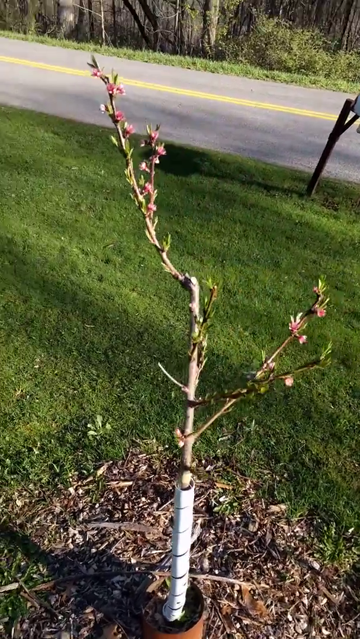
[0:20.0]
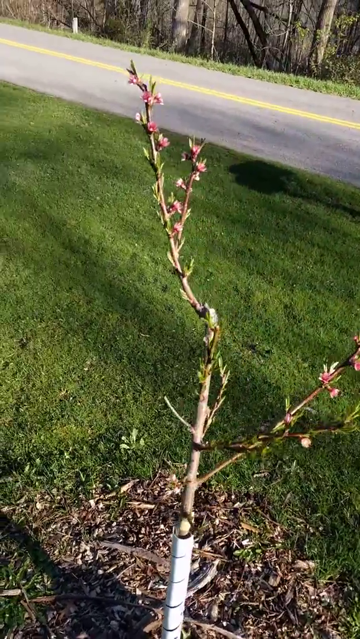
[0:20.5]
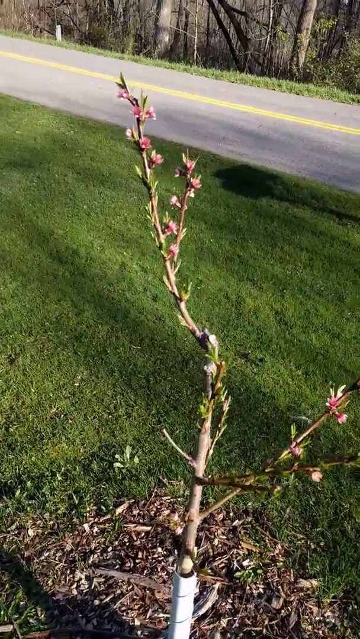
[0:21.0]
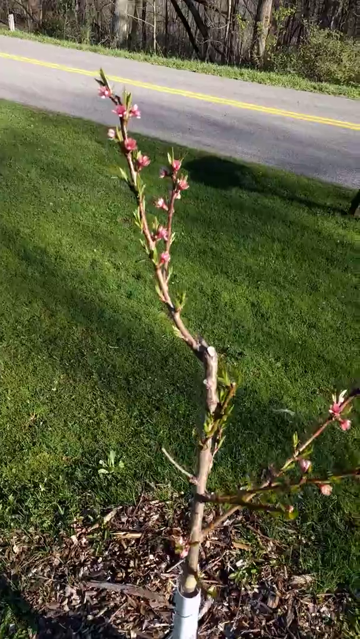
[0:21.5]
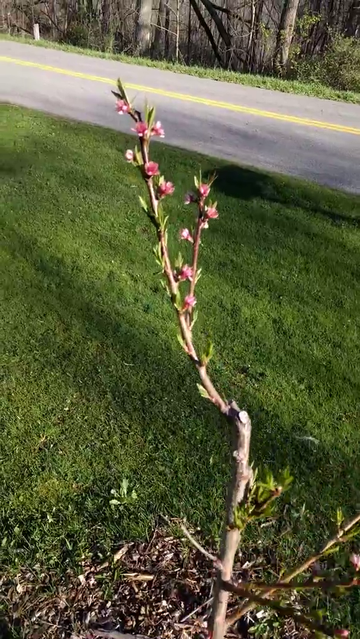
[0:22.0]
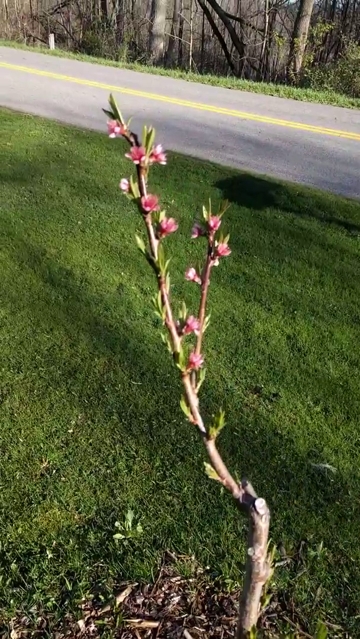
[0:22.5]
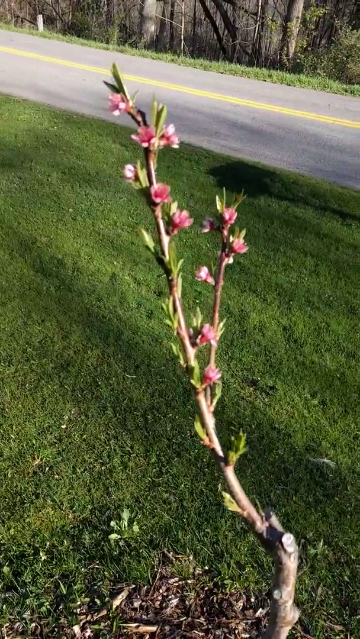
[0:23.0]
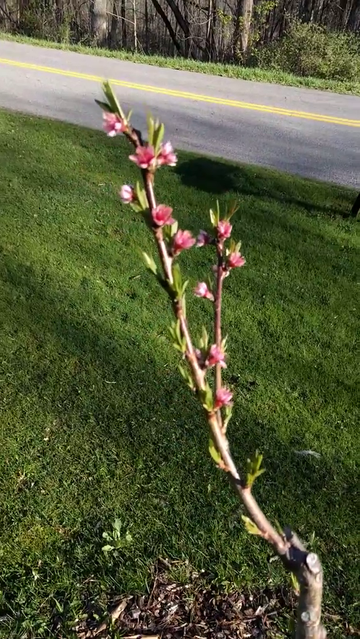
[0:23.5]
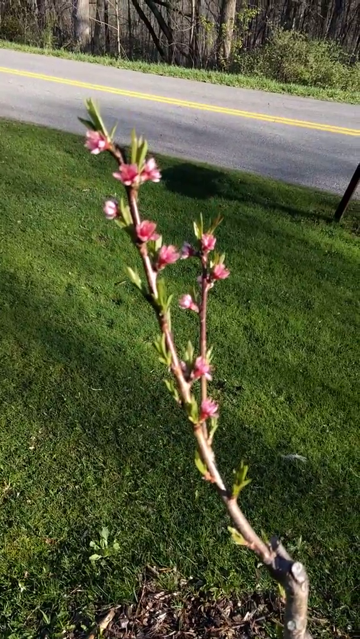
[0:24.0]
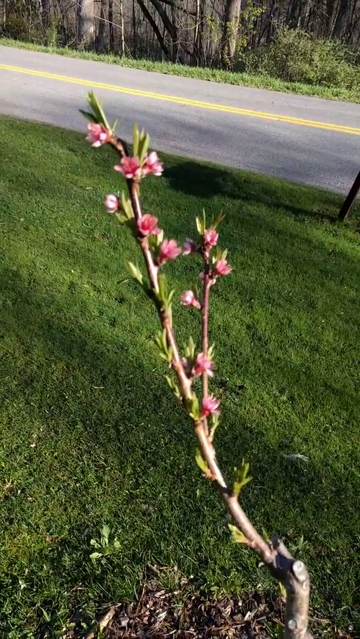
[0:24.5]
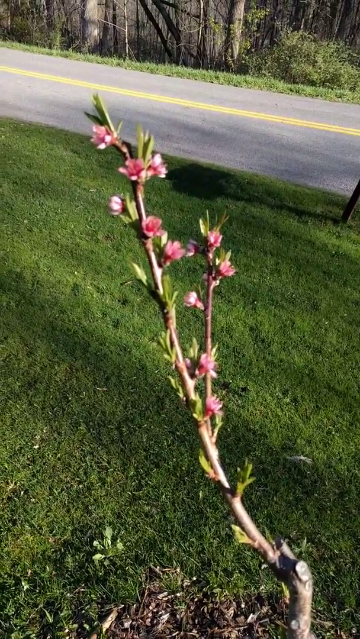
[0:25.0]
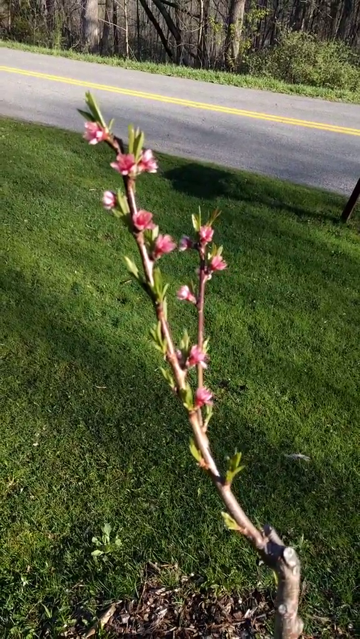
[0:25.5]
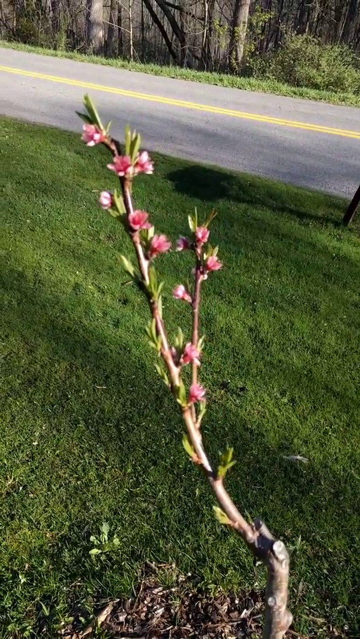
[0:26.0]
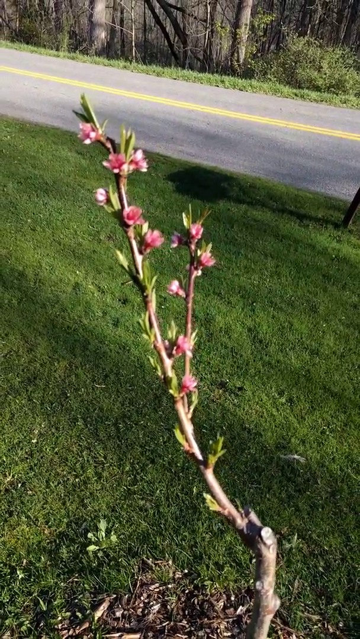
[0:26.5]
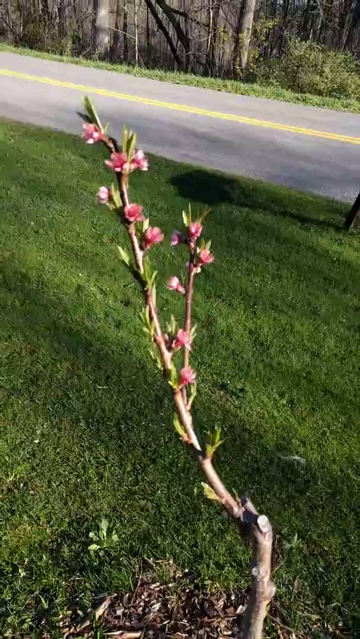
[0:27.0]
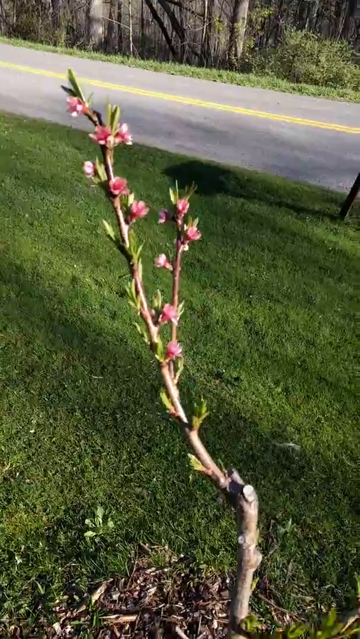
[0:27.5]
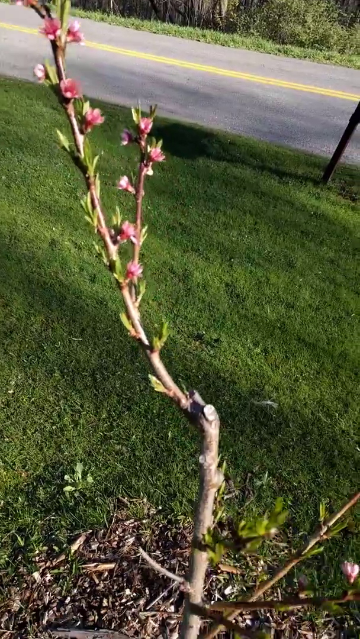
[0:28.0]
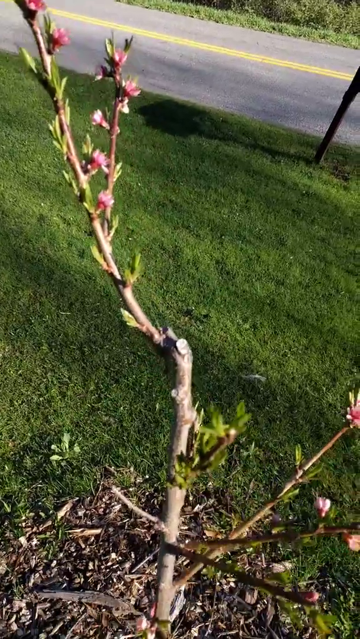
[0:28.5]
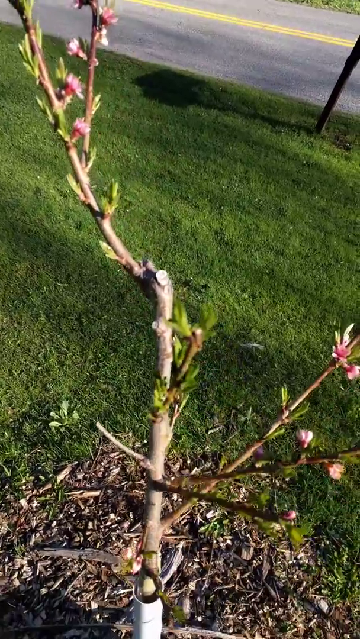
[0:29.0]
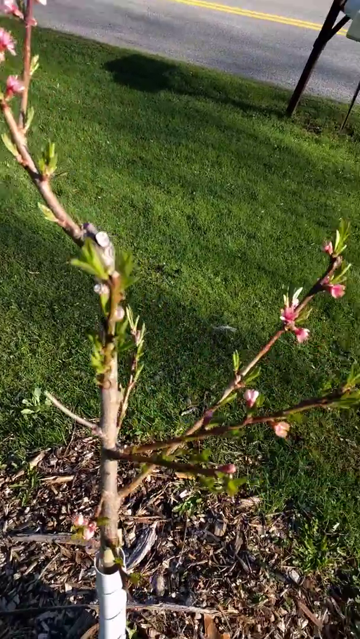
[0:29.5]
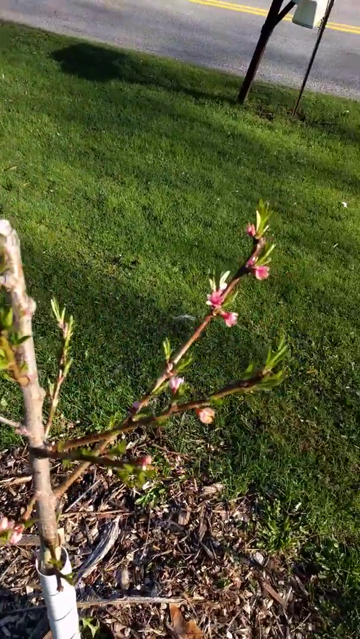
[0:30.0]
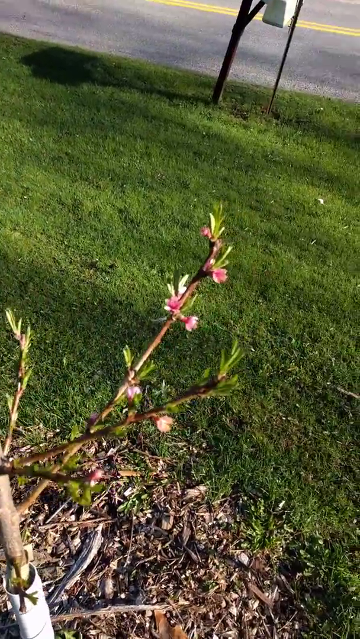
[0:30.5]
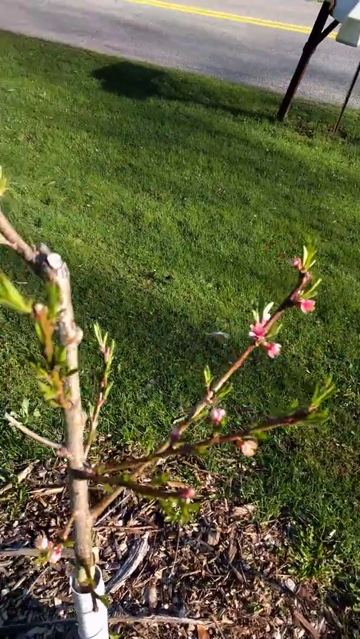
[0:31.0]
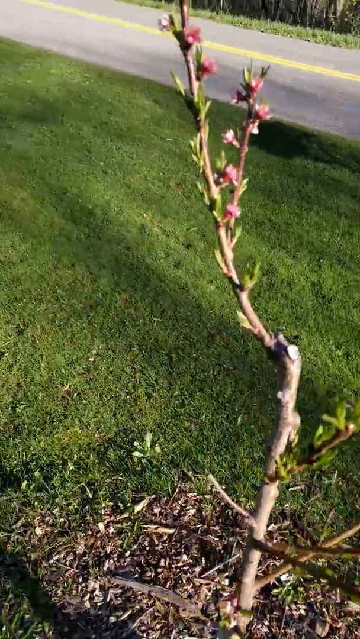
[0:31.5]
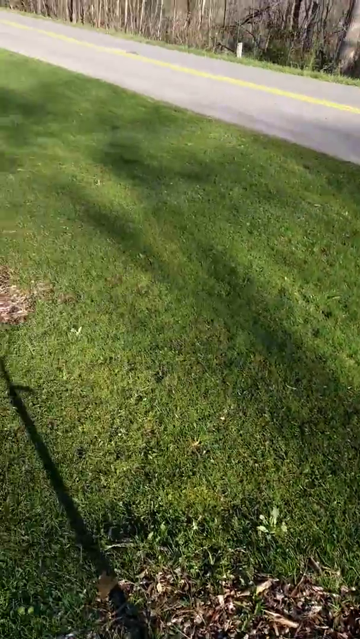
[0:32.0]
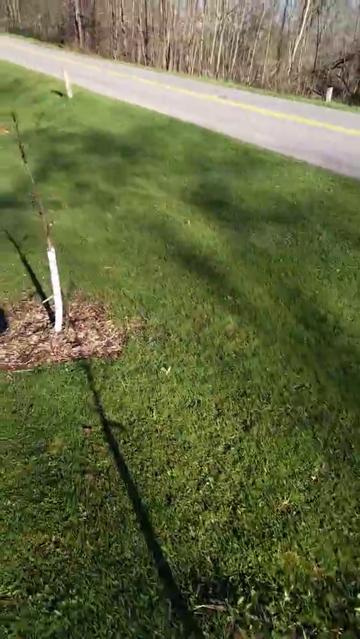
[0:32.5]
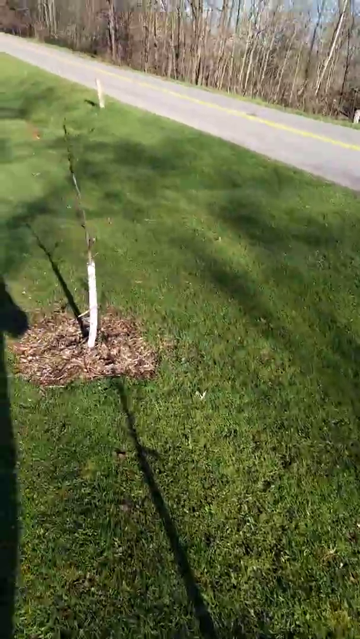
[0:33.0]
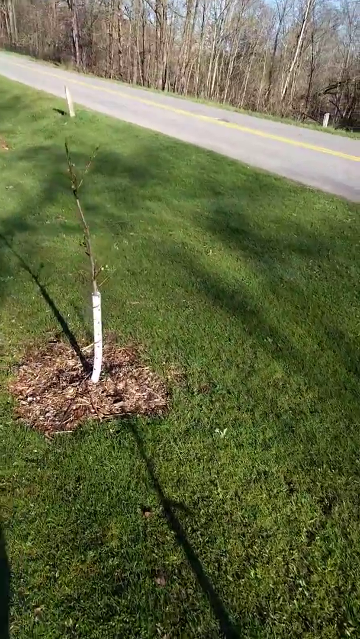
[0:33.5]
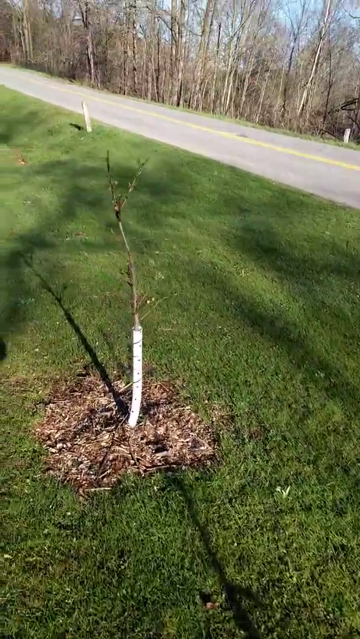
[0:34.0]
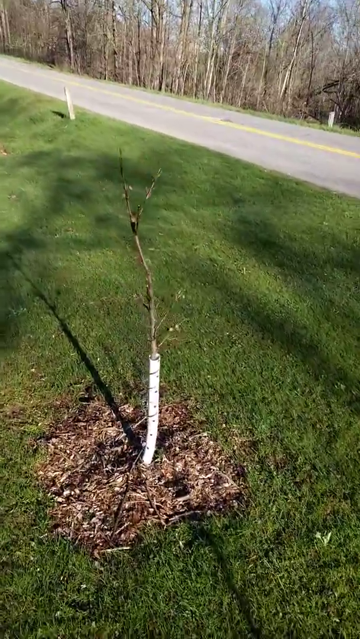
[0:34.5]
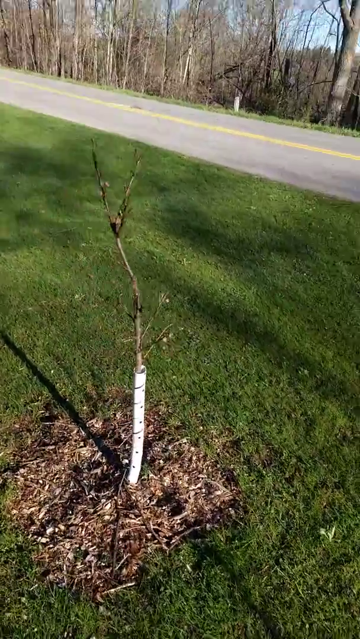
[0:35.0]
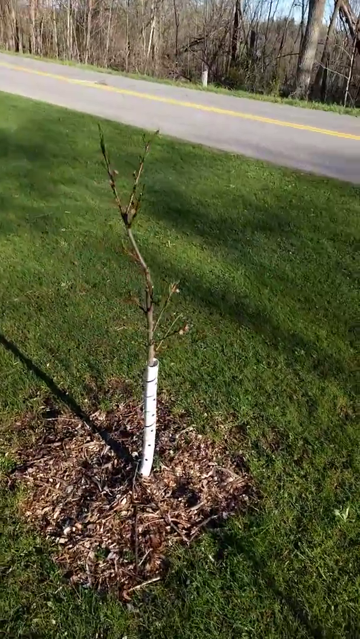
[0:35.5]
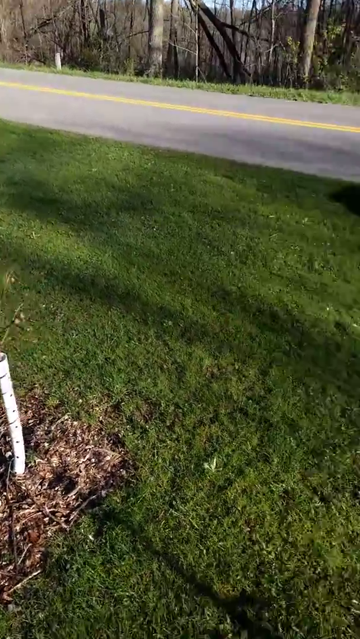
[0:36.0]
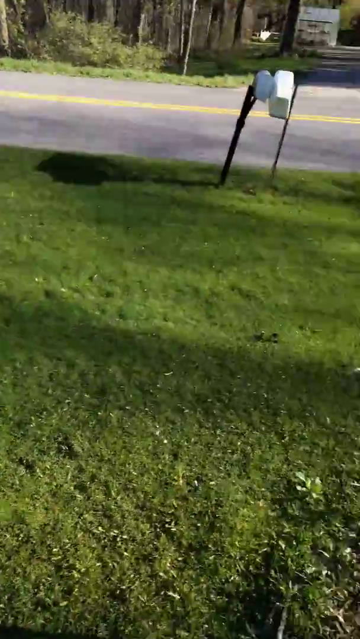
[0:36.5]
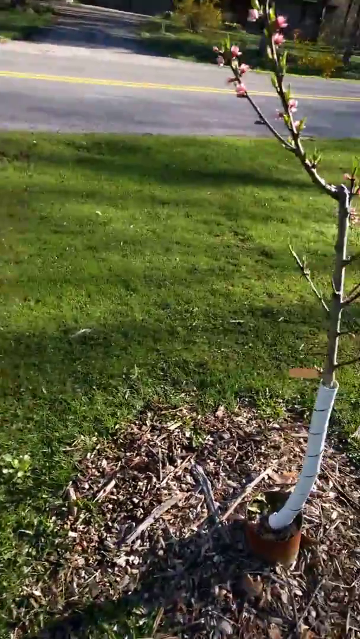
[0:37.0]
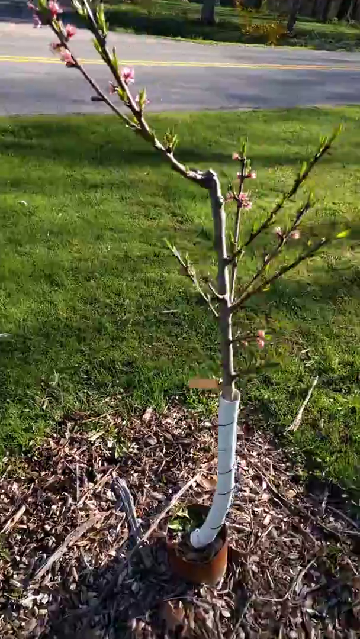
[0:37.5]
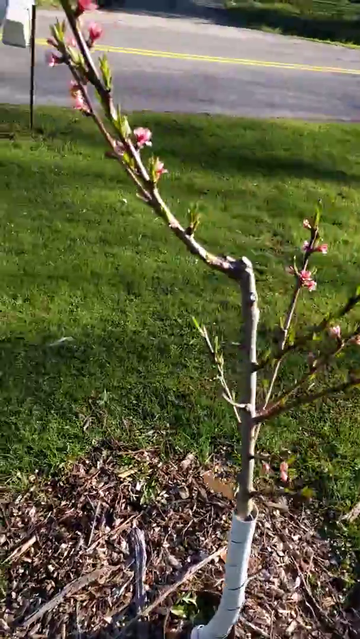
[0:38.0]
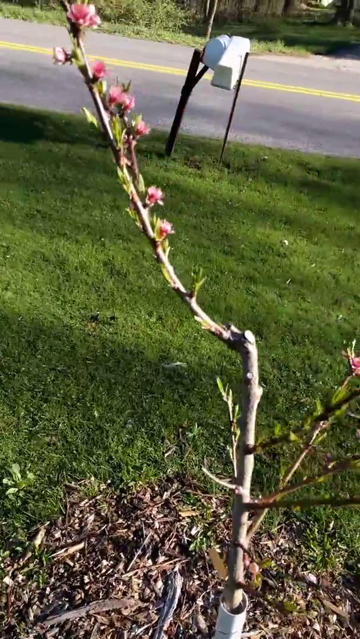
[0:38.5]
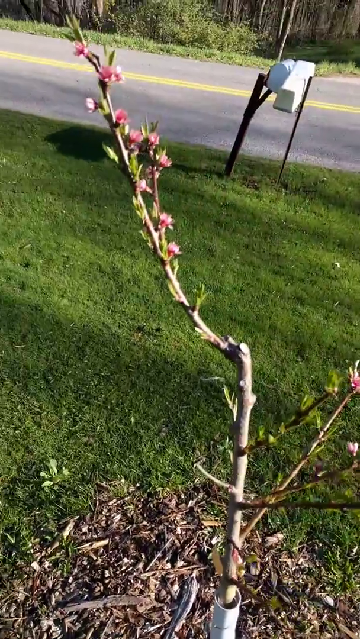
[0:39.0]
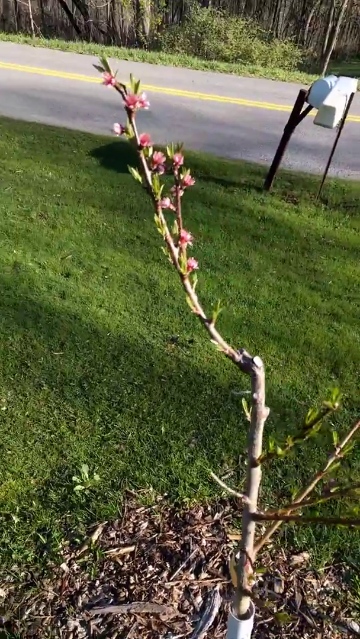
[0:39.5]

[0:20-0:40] The same tree, in the same pot, is planted in the ground. Grass is behind it, along with a road with a yellow strip in the middle. The person zooms in on a branch, showing pink flowers, though the low resolution makes them hard to see clearly. The person then moves to a second tree, planted in the ground just like the first, and then goes back to the first tree.